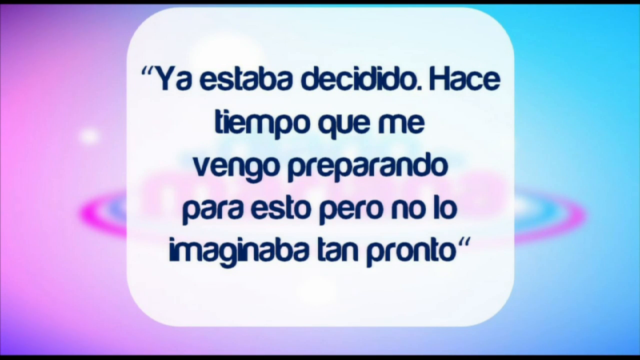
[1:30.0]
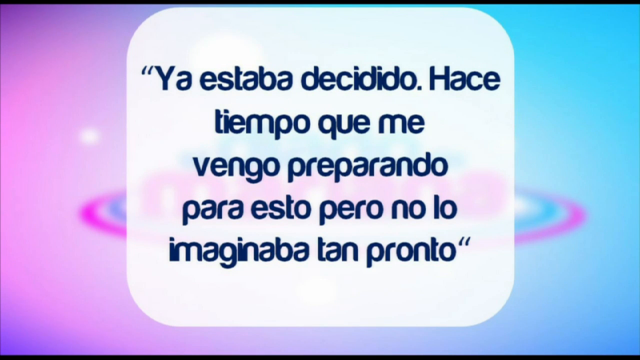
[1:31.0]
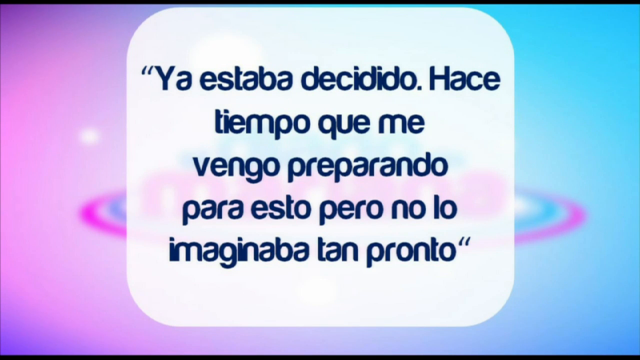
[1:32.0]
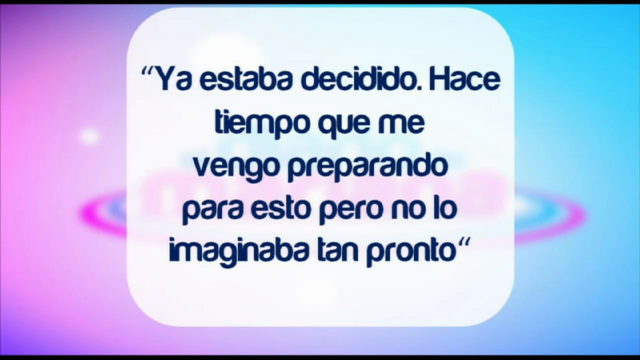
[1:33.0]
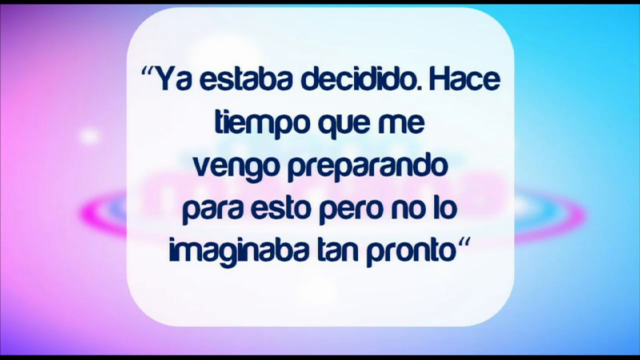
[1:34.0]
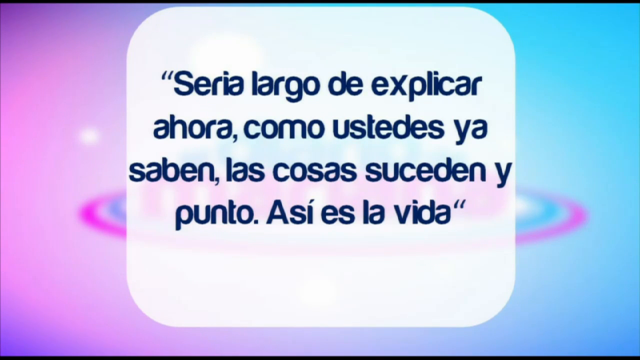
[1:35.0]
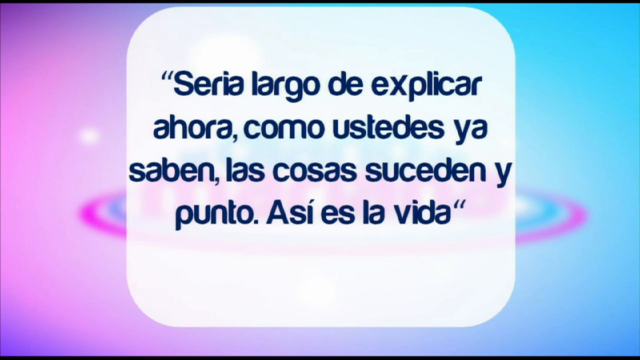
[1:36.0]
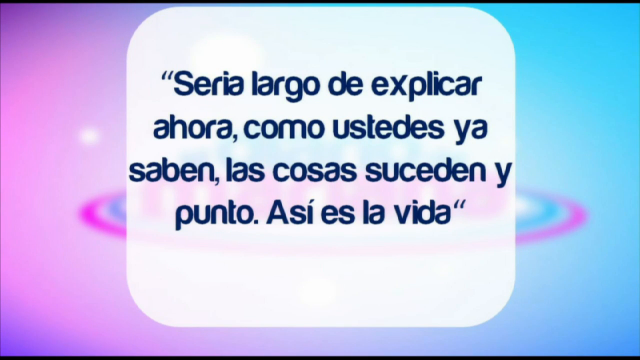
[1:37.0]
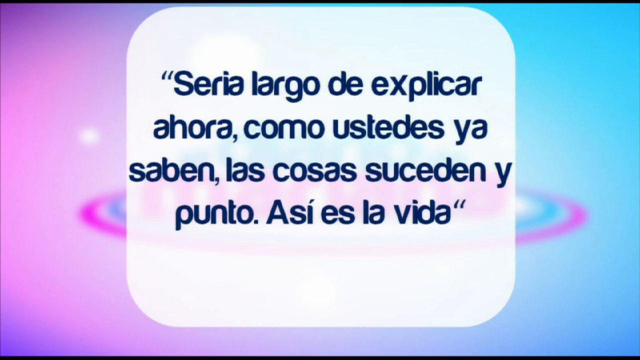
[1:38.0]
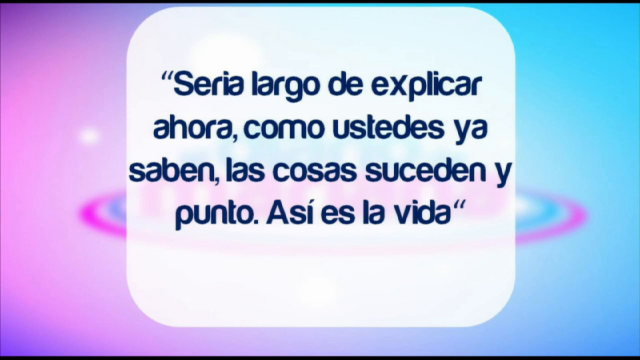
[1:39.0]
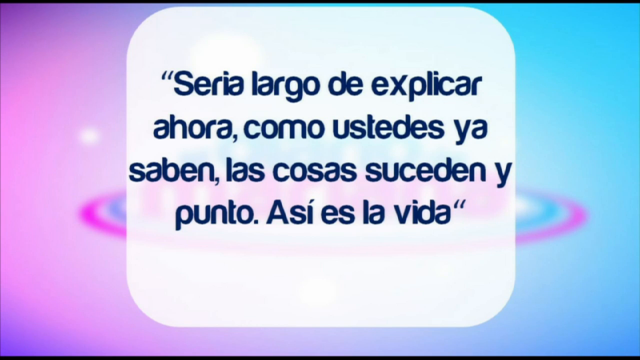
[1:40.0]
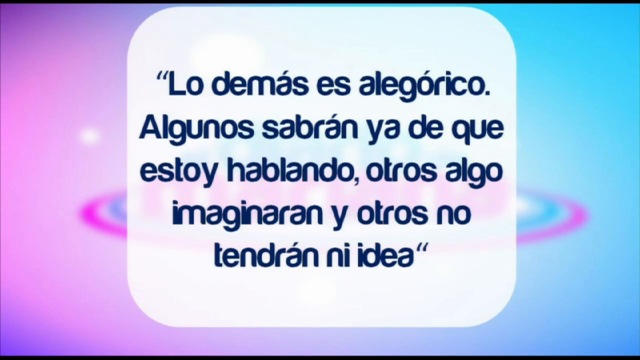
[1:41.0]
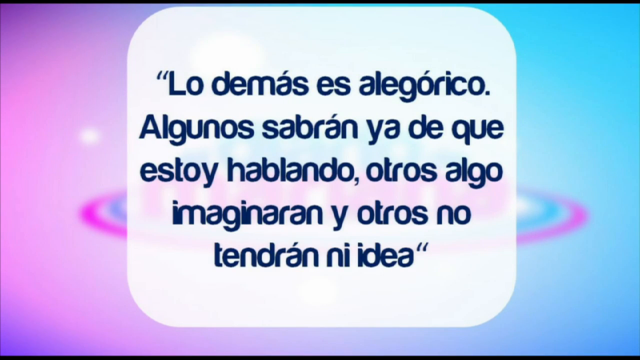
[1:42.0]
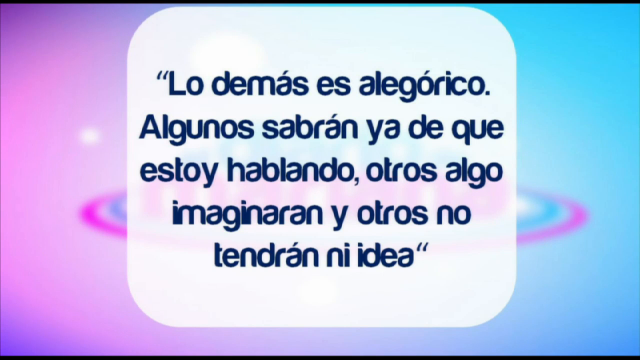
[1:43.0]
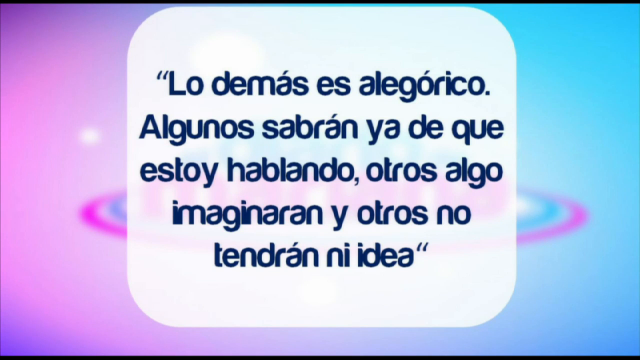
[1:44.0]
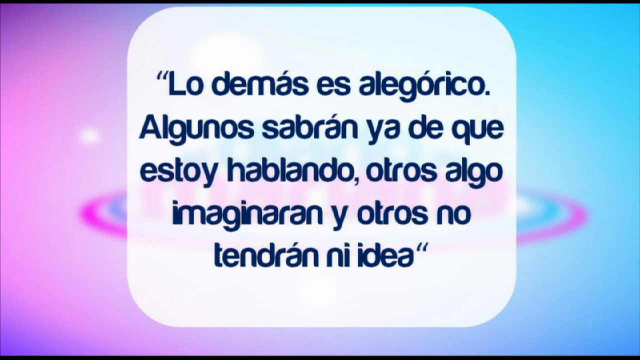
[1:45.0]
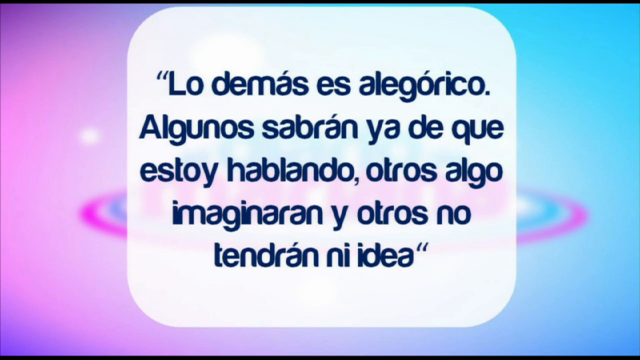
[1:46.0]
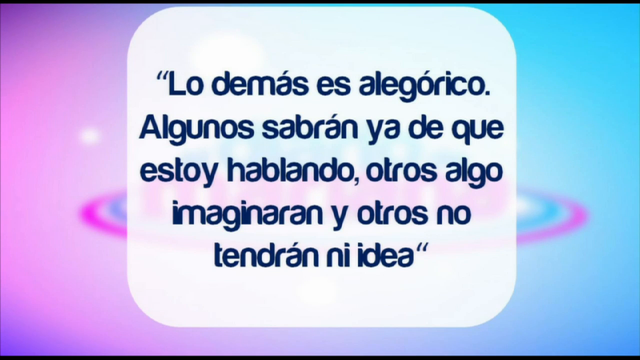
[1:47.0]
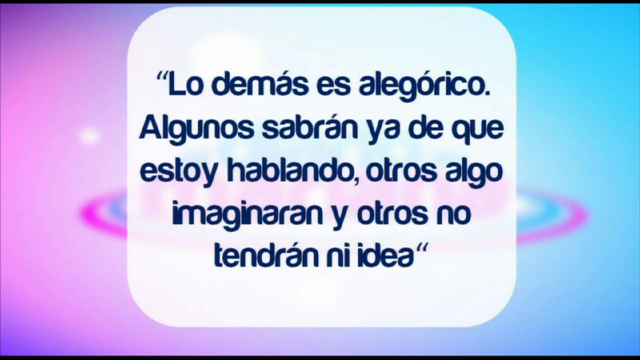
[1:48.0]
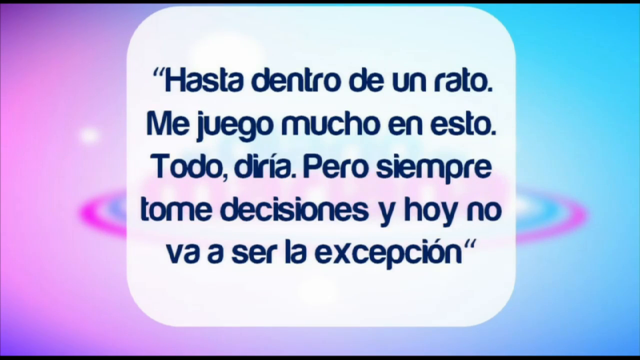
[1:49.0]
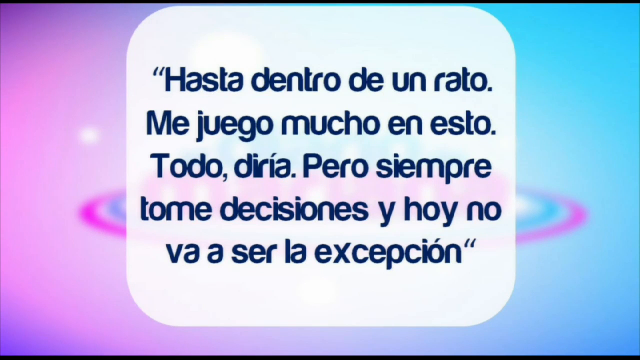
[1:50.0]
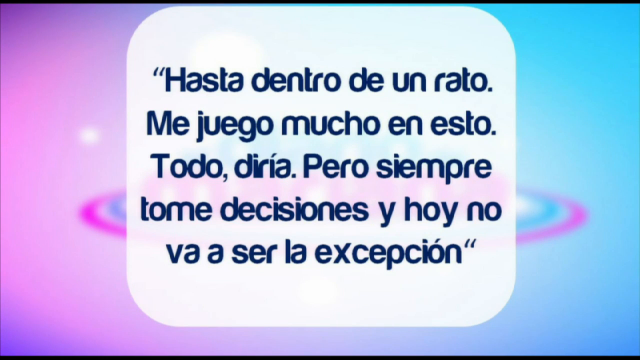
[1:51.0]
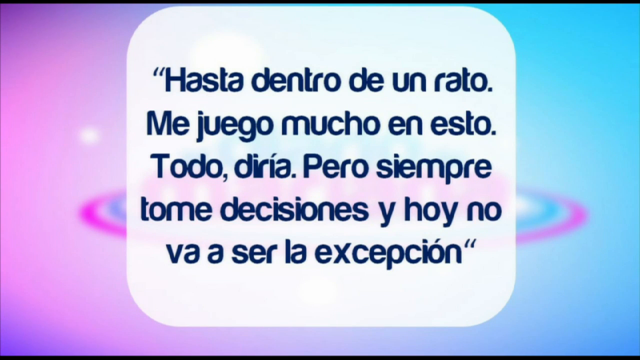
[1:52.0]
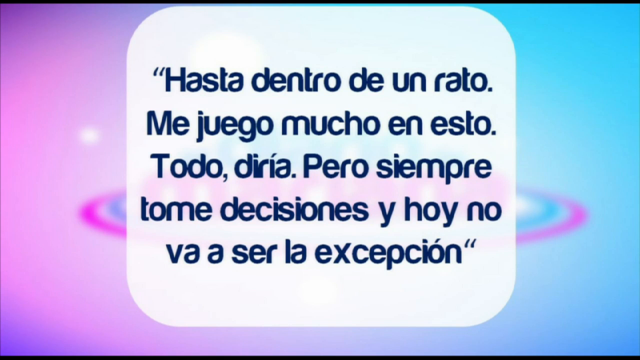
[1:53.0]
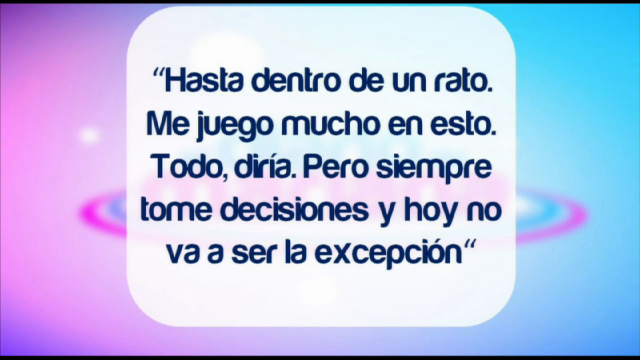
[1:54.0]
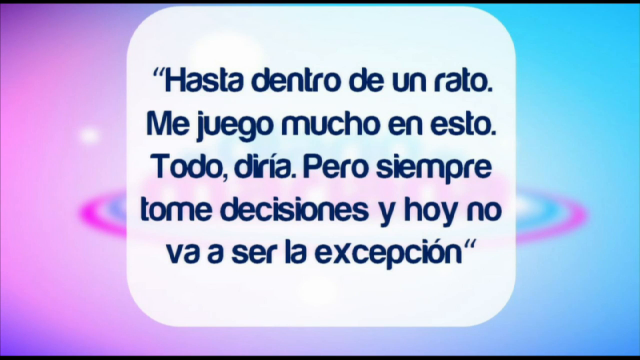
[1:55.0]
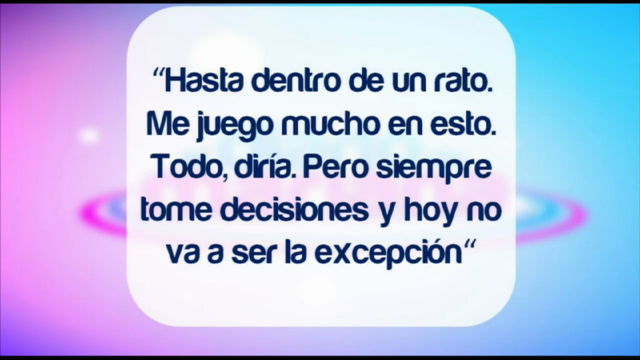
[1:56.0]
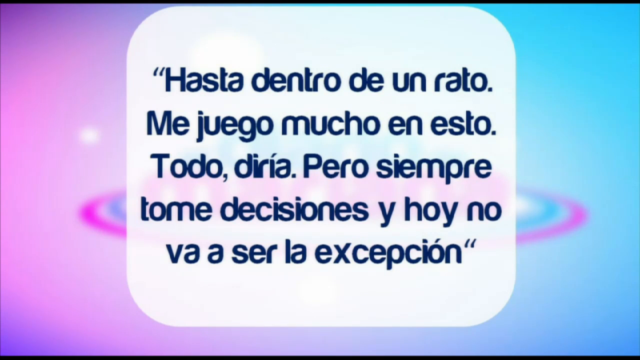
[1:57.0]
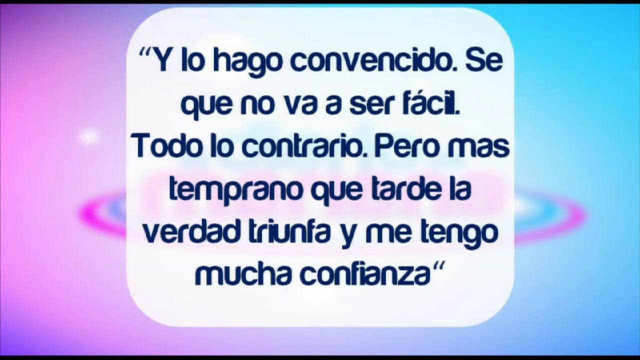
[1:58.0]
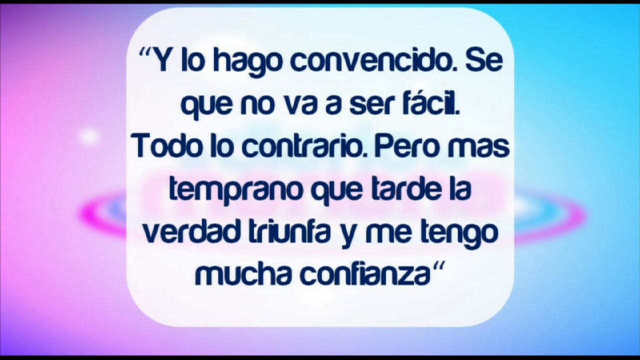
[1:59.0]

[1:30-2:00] Spanish text continues to appear in the middle of the screen, changing to one new set after another, each with dark blue words on a white background. The side background remains, very light purple on the left and light blue on the right.